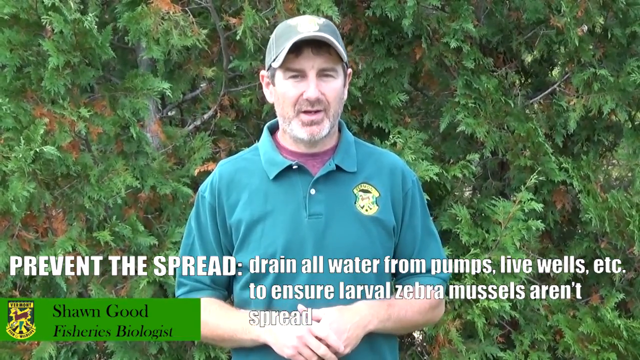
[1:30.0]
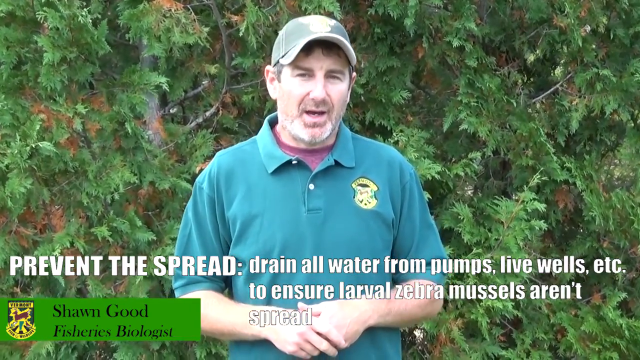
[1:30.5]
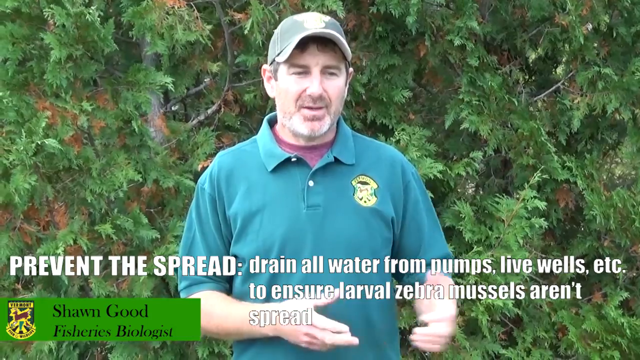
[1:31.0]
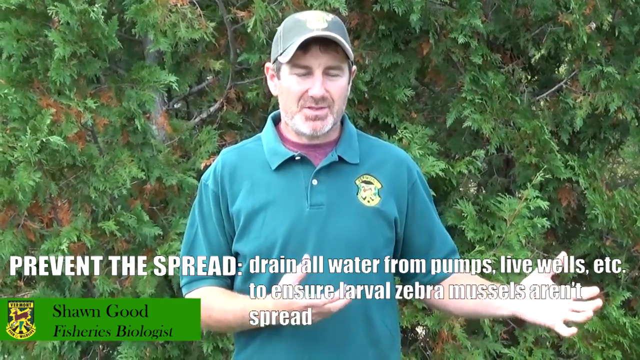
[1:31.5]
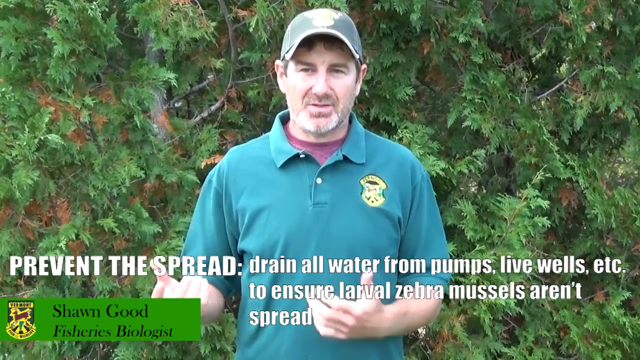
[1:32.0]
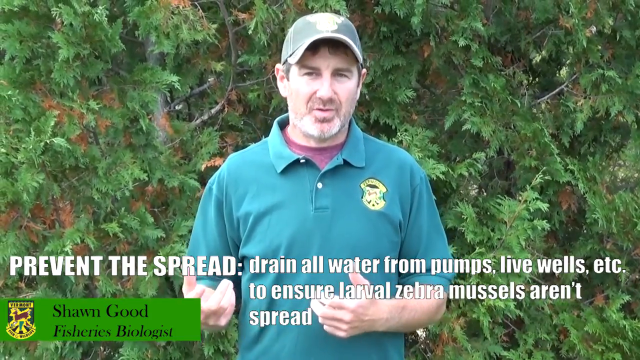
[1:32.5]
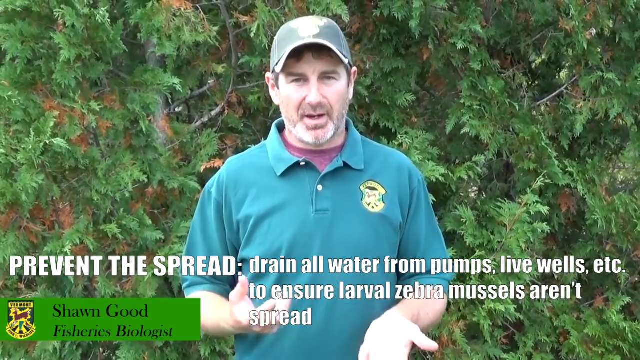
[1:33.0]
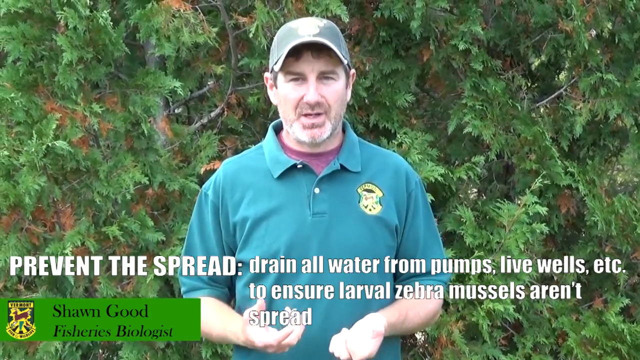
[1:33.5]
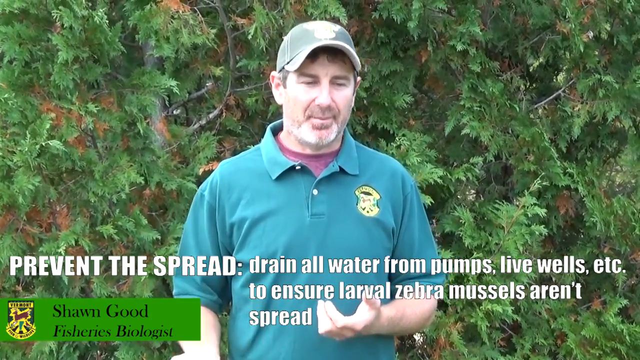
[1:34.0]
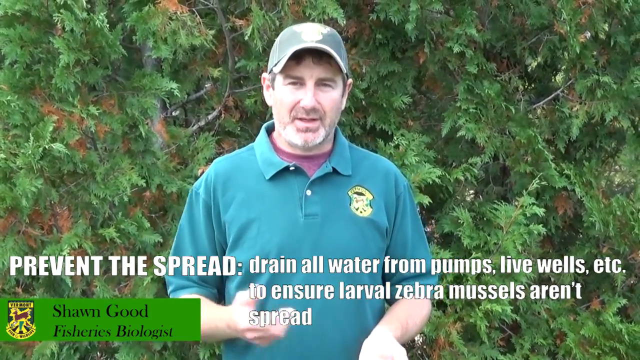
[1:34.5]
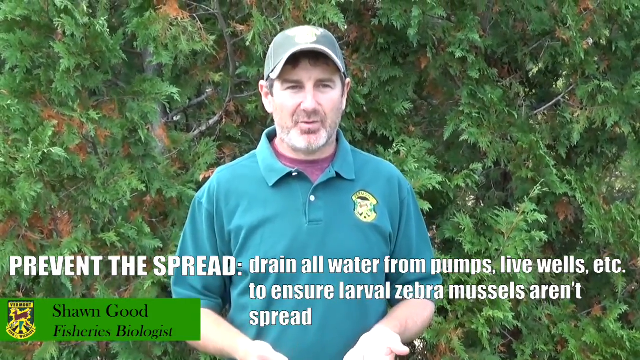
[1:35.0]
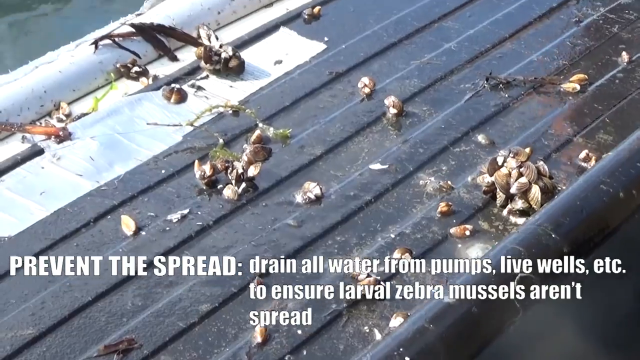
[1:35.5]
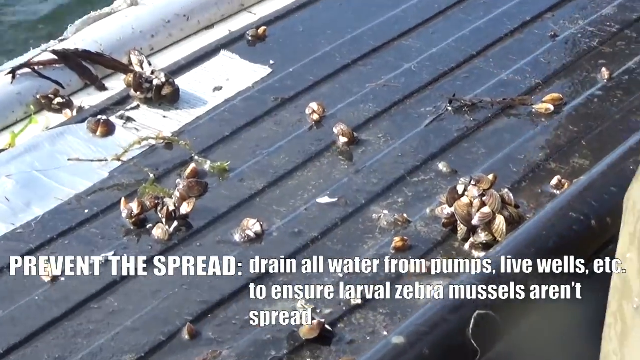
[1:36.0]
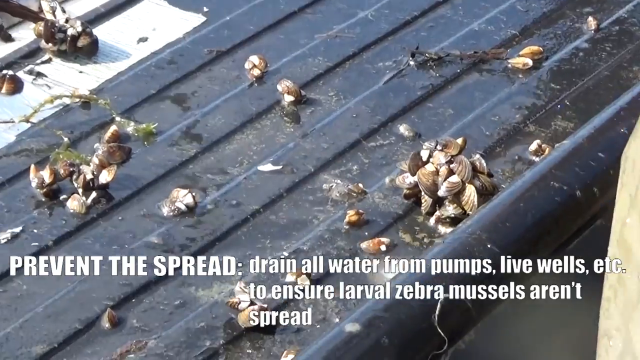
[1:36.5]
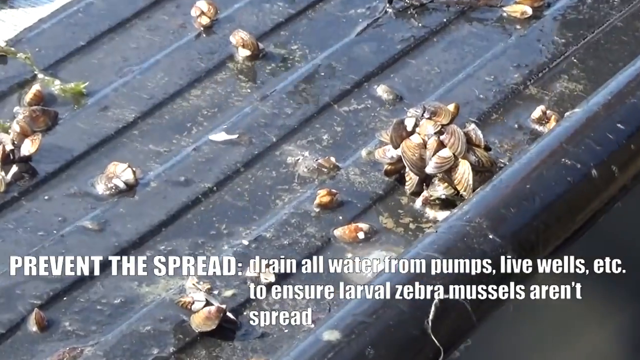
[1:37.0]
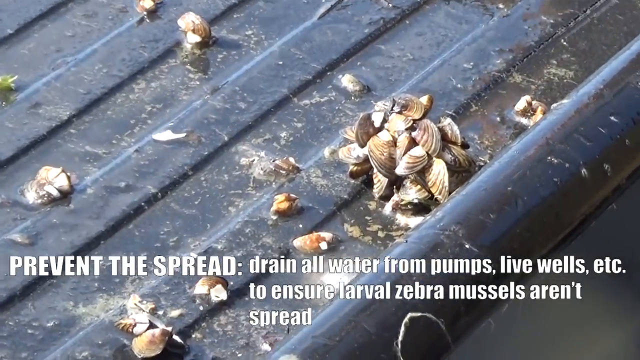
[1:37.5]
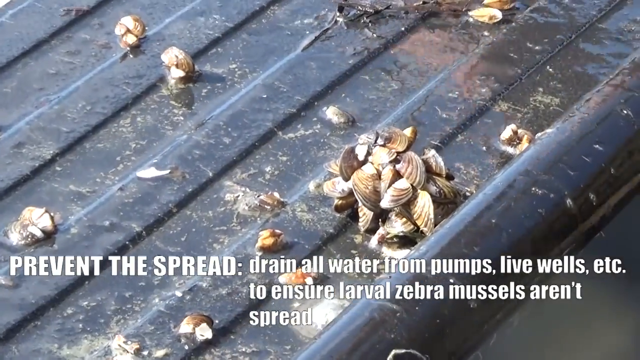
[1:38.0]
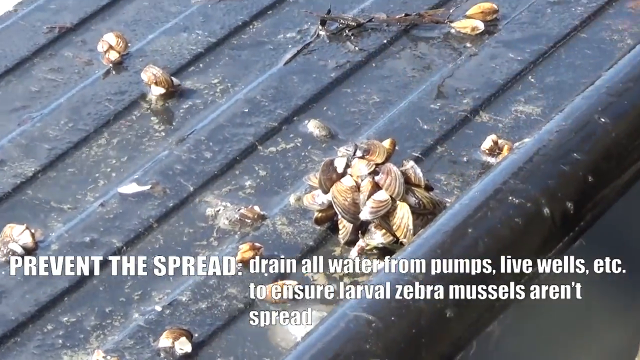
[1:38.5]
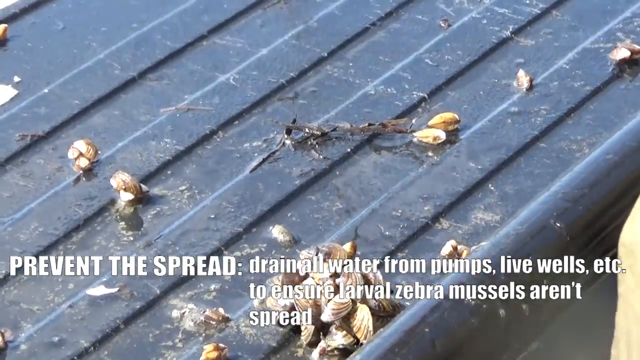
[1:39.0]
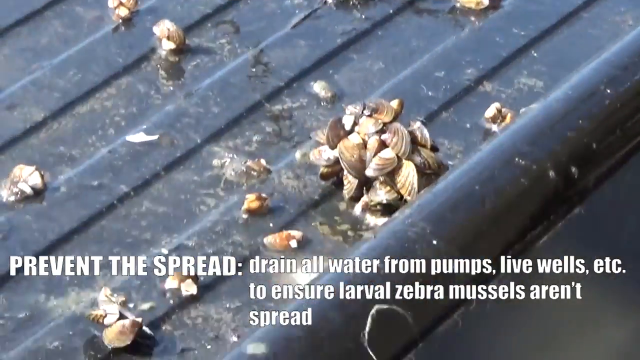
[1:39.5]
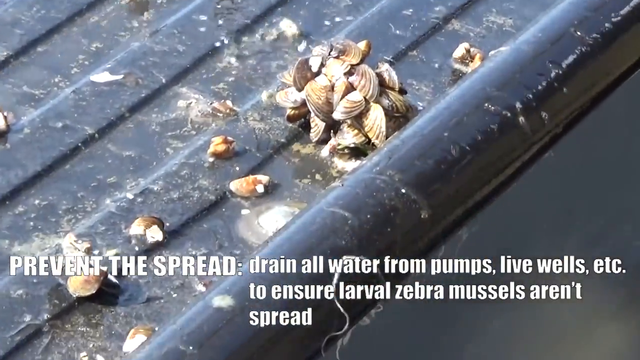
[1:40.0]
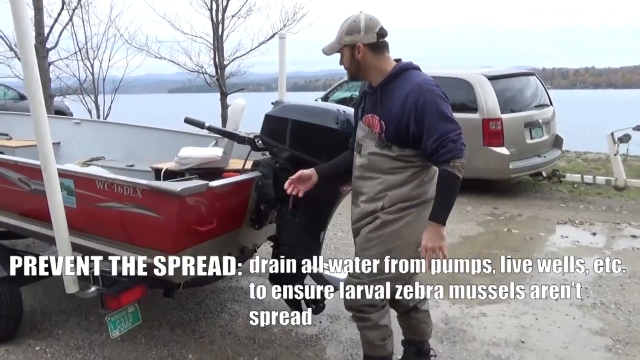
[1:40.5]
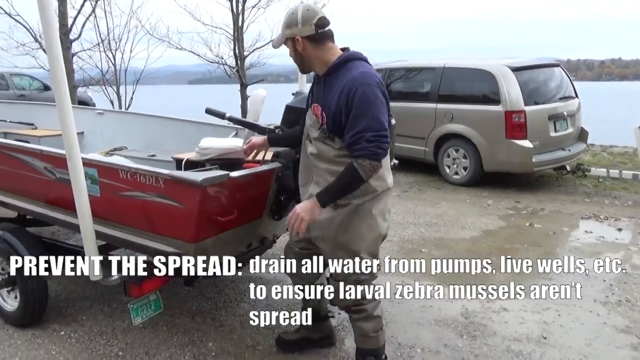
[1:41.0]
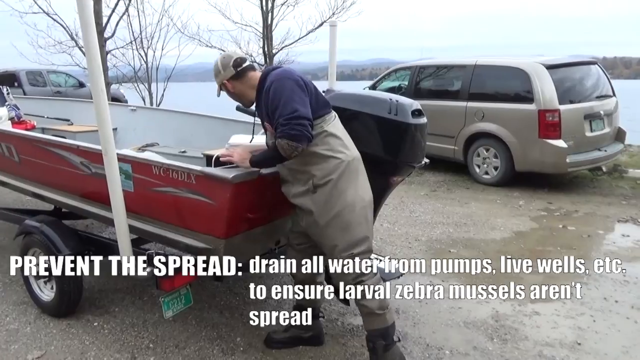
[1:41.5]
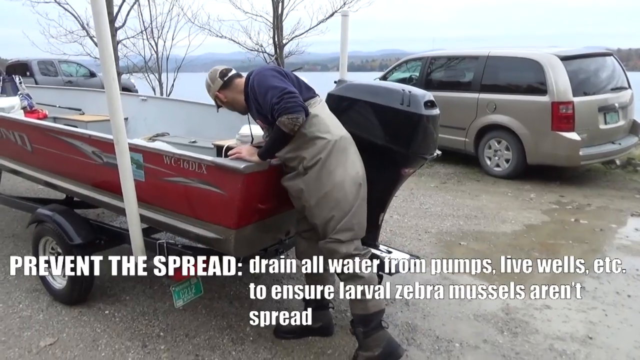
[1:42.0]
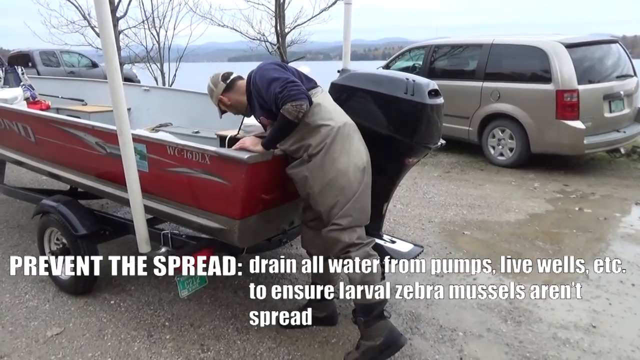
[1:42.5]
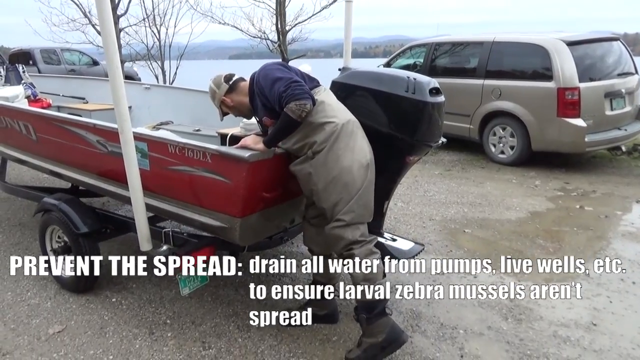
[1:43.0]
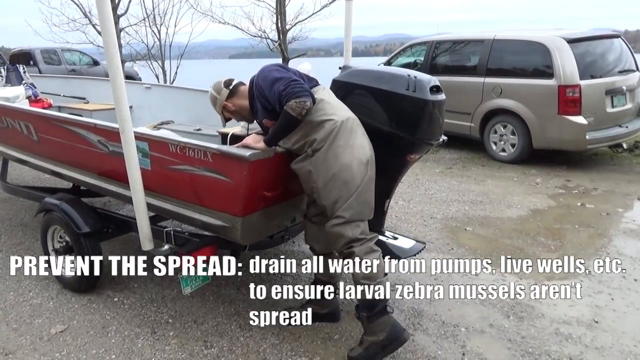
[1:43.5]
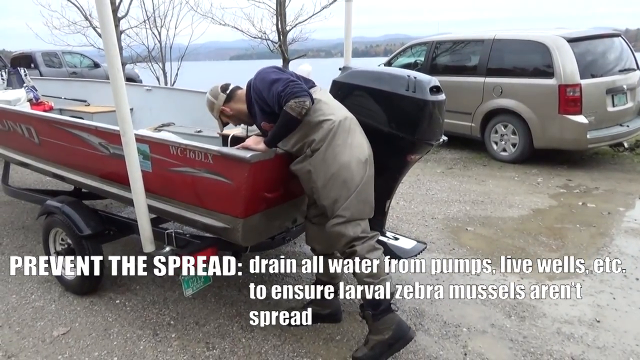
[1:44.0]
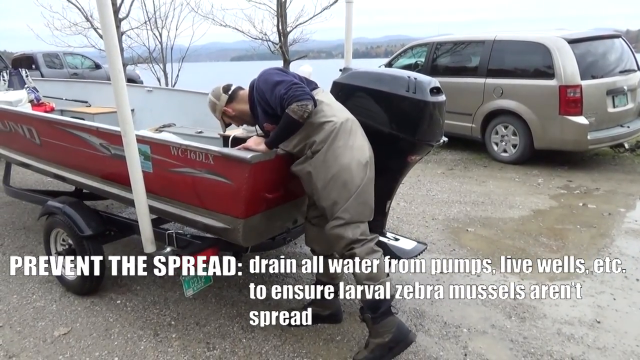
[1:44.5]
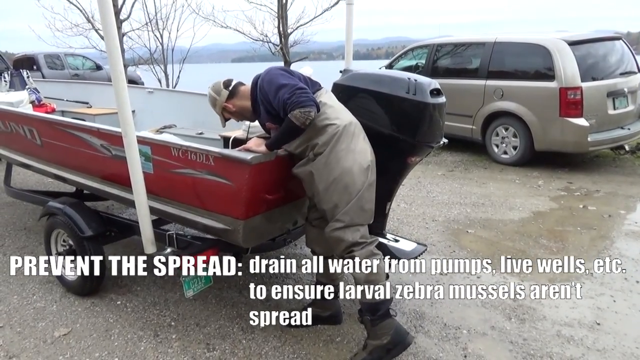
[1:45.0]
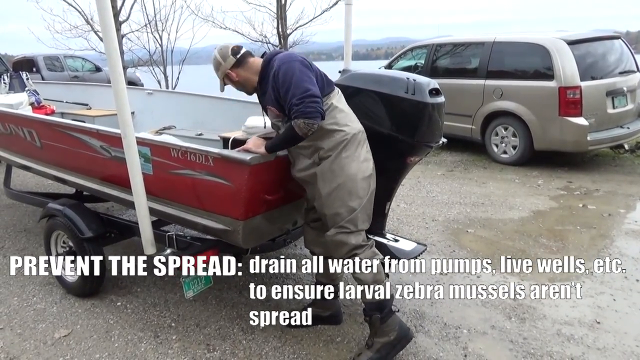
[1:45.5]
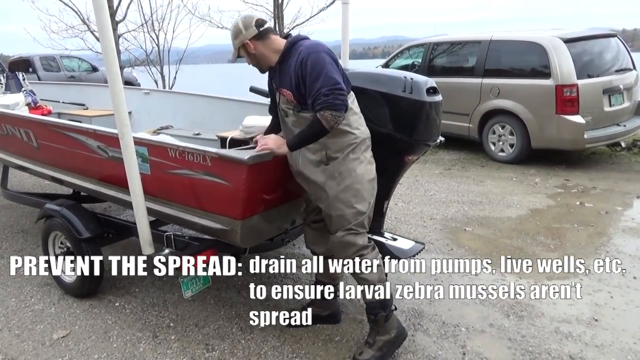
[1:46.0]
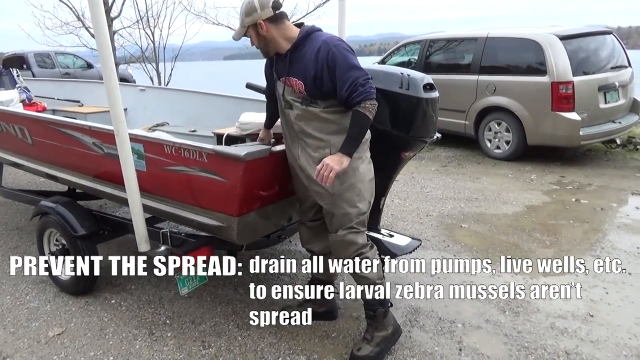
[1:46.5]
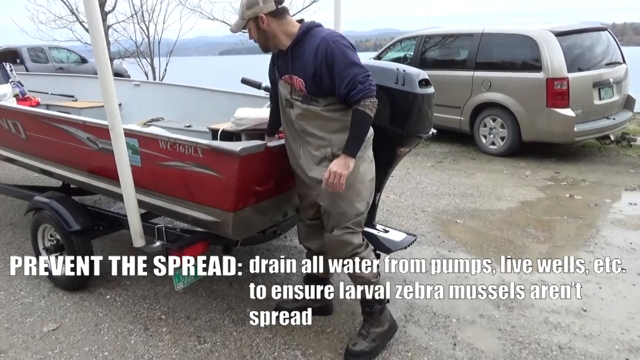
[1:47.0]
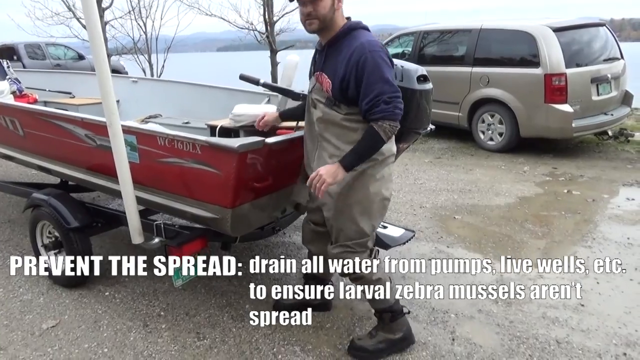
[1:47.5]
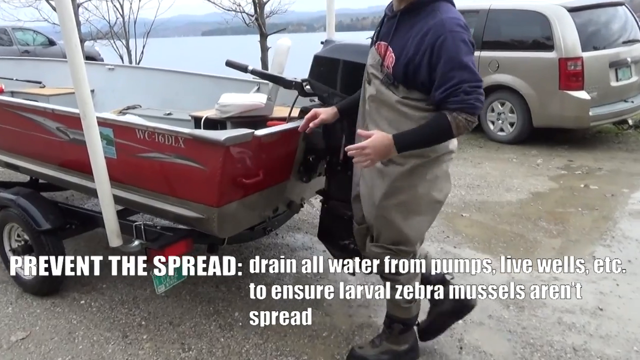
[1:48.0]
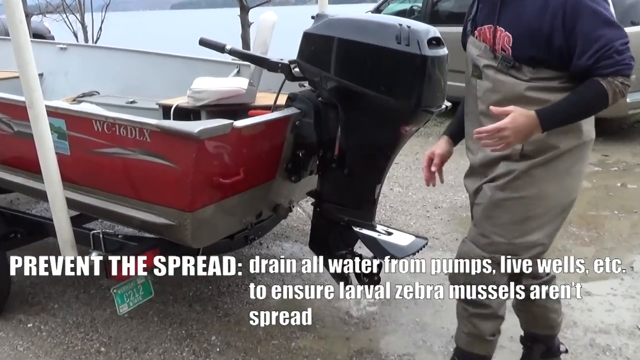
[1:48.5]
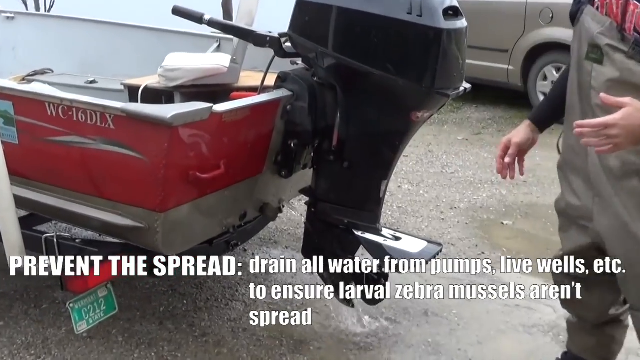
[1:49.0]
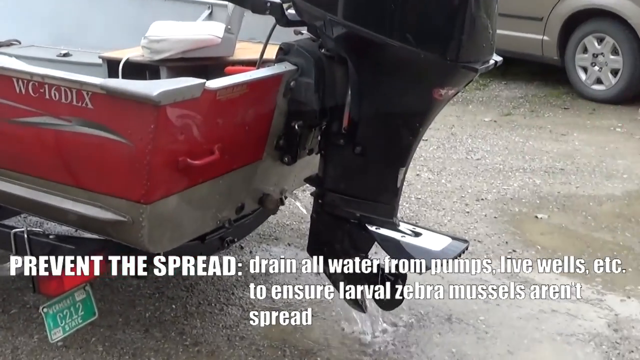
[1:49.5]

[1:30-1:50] Sean Good appears, with the label identifying him as a fisheries biologist in black letters on a green background in the bottom left corner of the screen. To the left of the label is some type of patch with a deer on it. Text in front of Sean reads "Prevent the spread. Drain all water from pumps, live wells, etc., to ensure larval zebra mussels aren't spread." Sean is in his early 50s, with dark hair and dark eyes. He wears a baseball cap and a light green shirt with a darker shirt underneath.